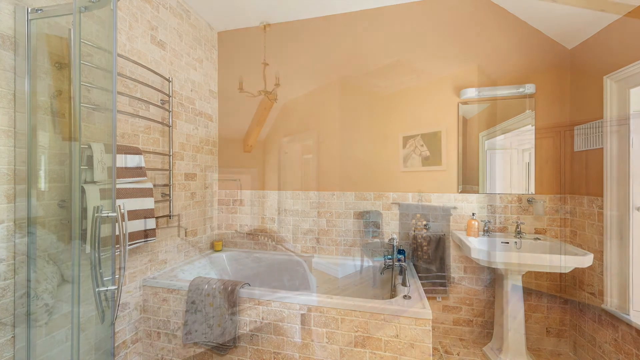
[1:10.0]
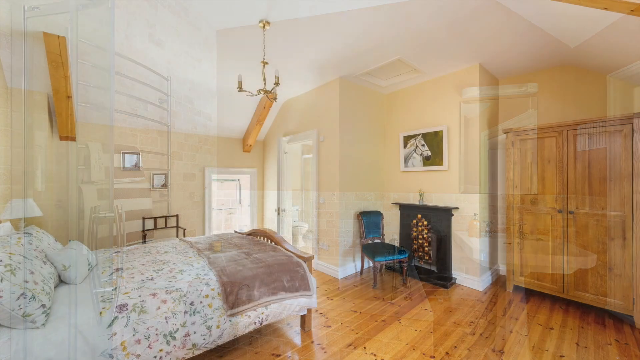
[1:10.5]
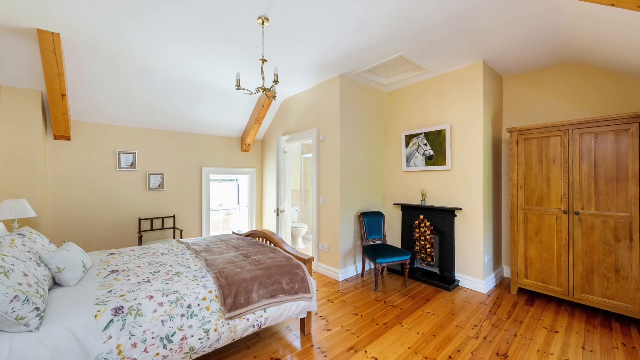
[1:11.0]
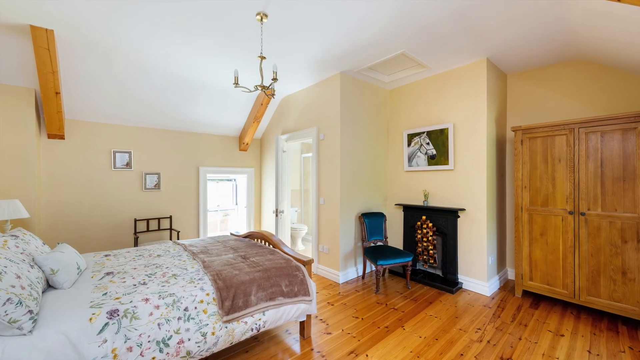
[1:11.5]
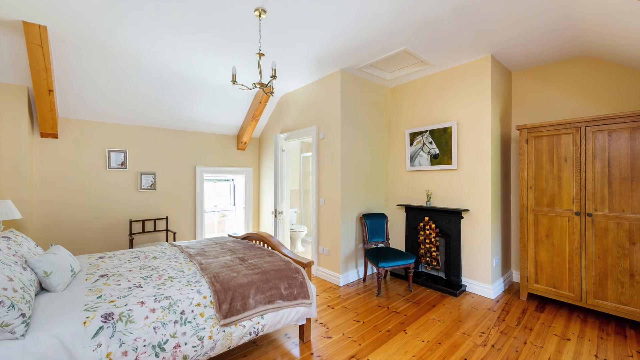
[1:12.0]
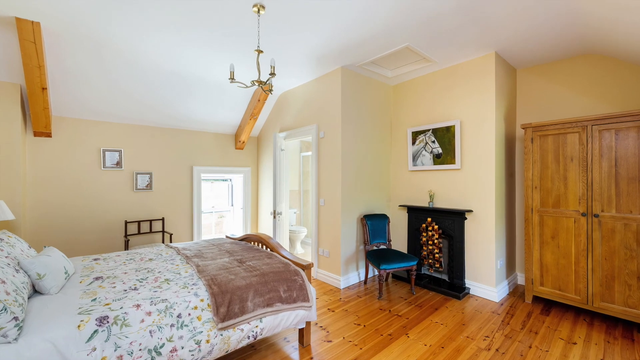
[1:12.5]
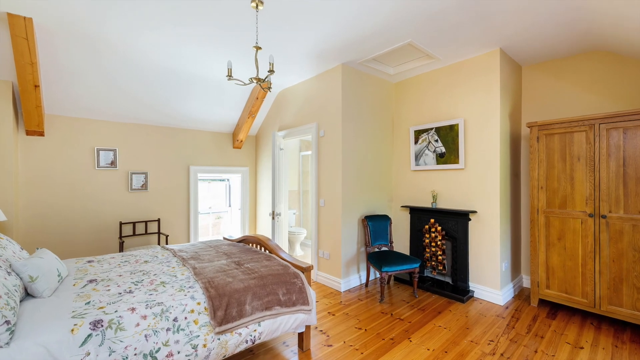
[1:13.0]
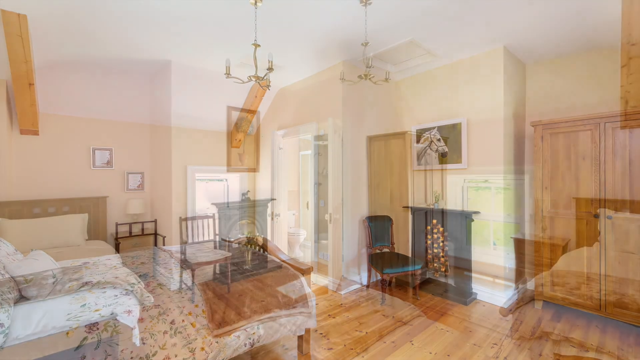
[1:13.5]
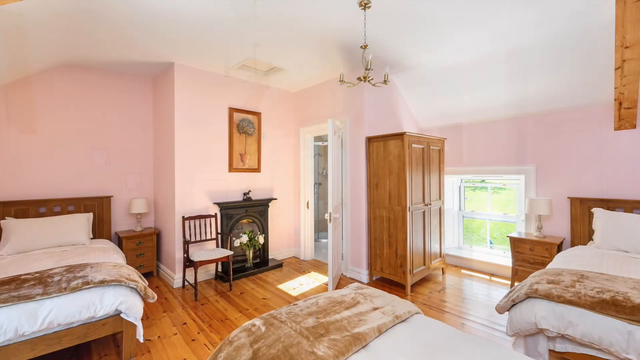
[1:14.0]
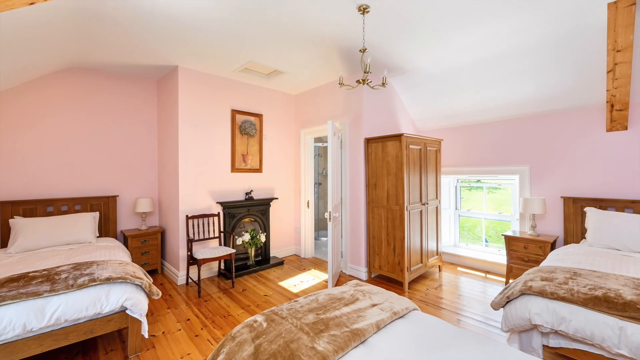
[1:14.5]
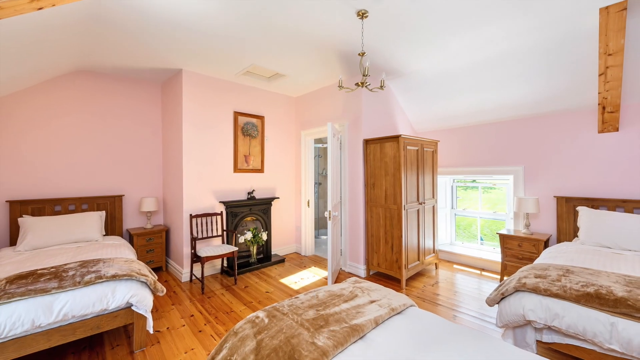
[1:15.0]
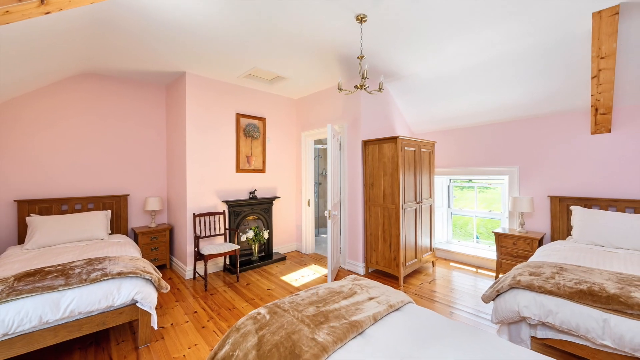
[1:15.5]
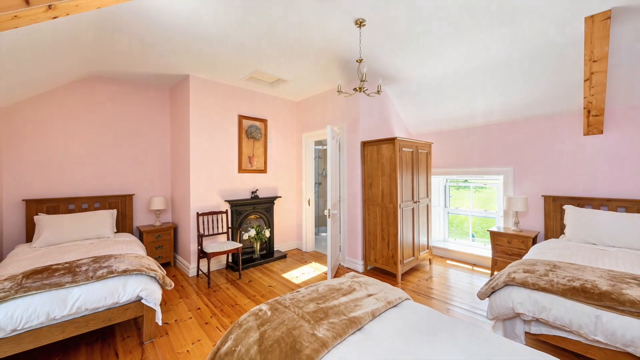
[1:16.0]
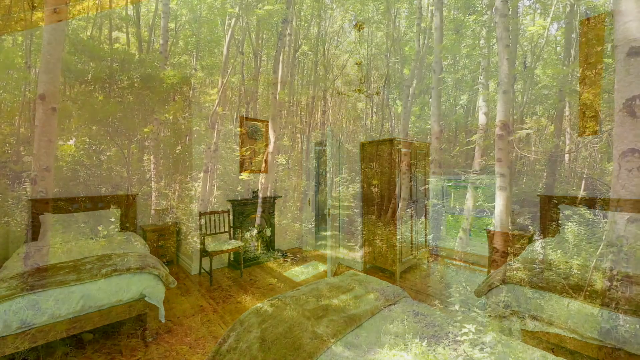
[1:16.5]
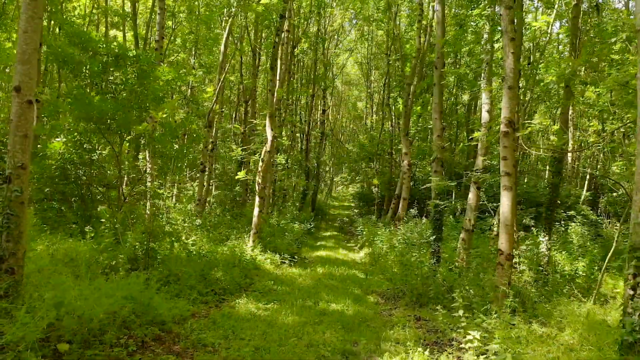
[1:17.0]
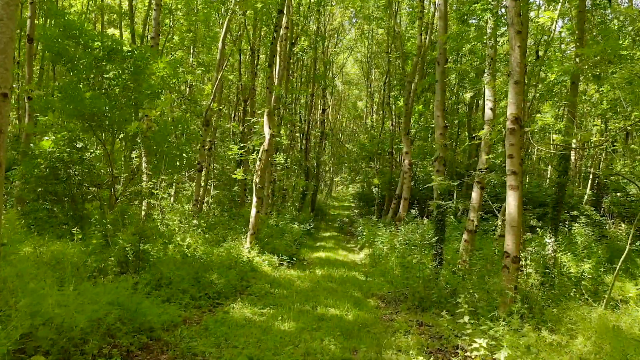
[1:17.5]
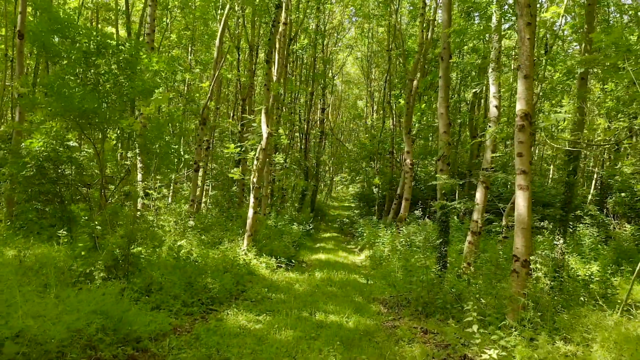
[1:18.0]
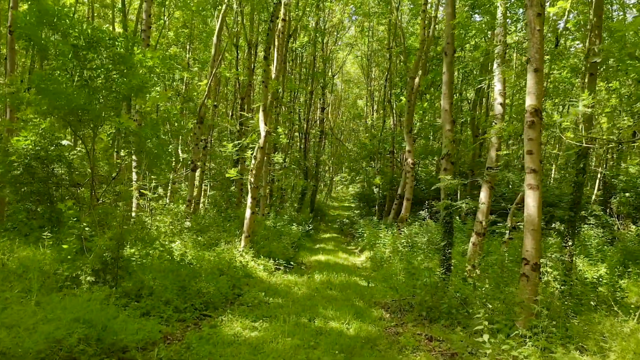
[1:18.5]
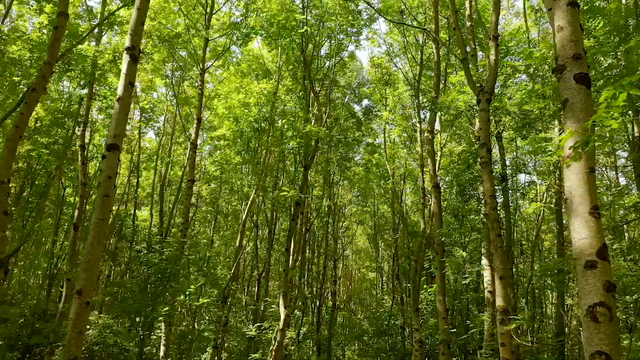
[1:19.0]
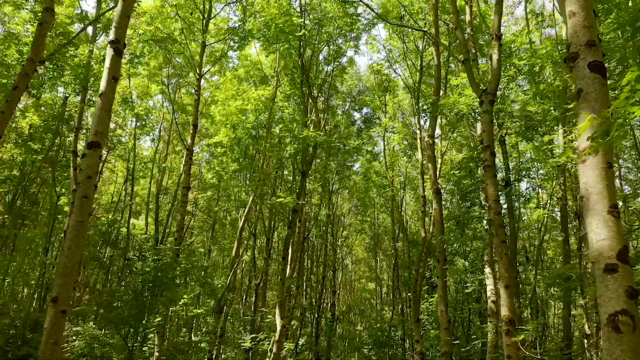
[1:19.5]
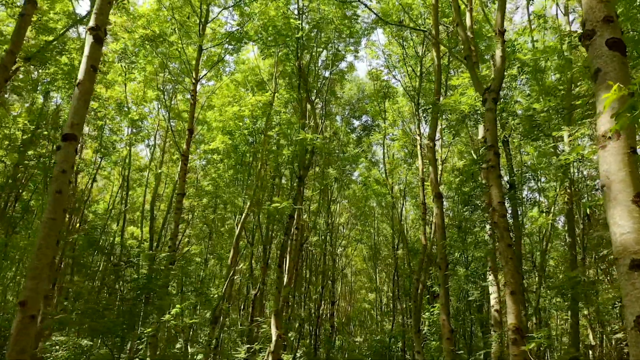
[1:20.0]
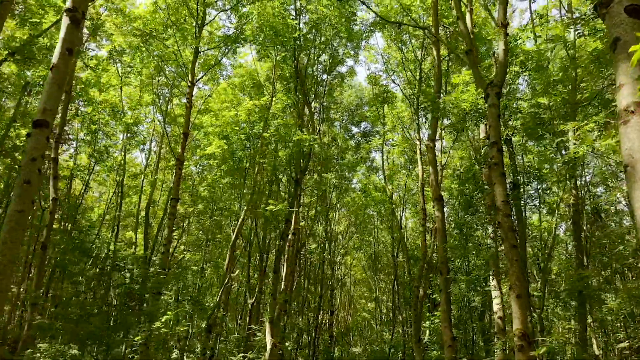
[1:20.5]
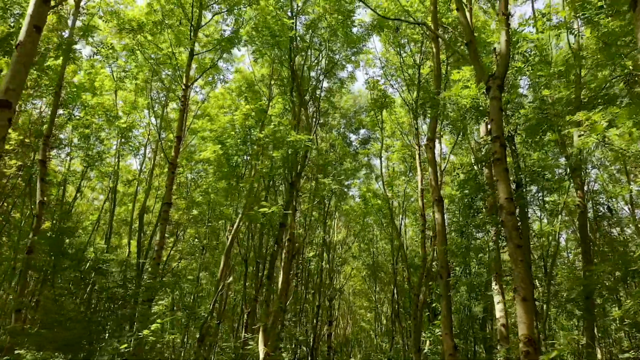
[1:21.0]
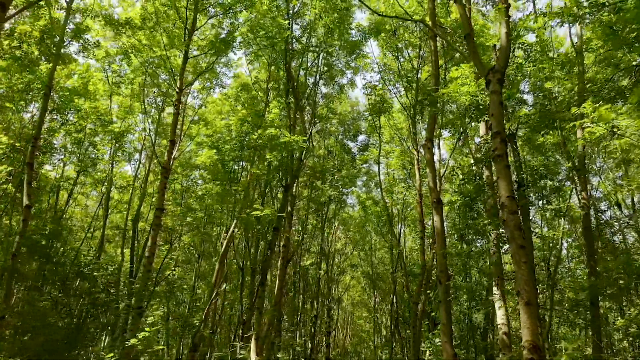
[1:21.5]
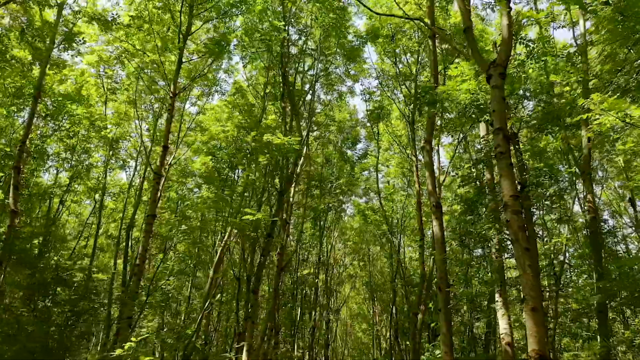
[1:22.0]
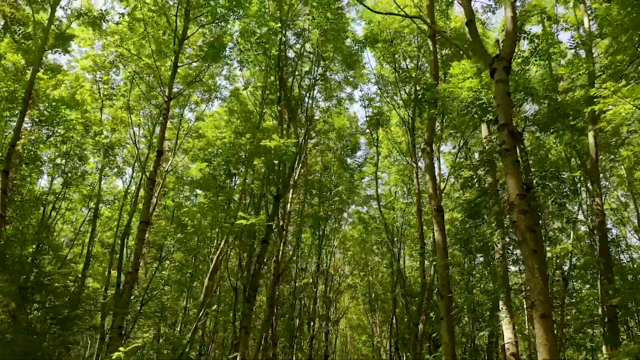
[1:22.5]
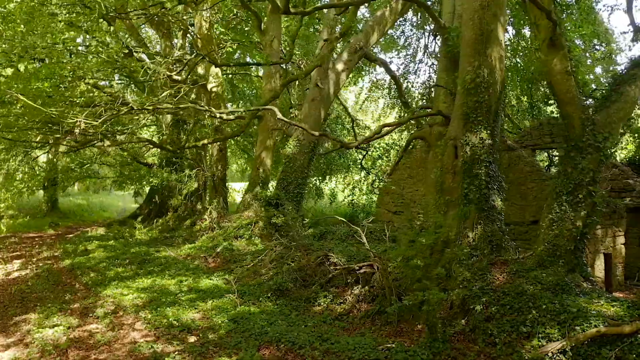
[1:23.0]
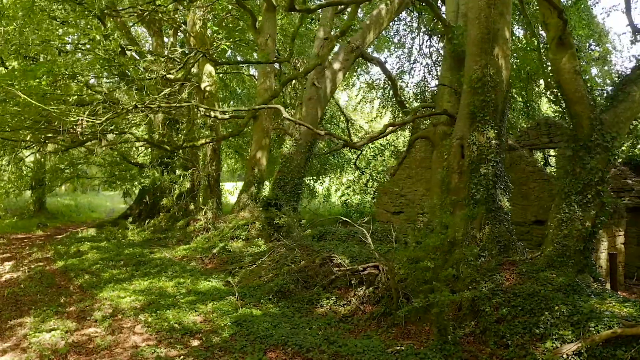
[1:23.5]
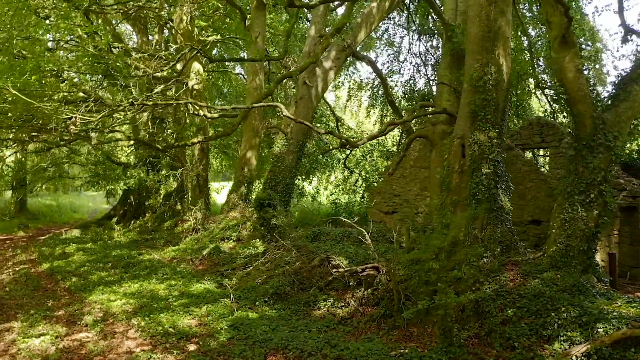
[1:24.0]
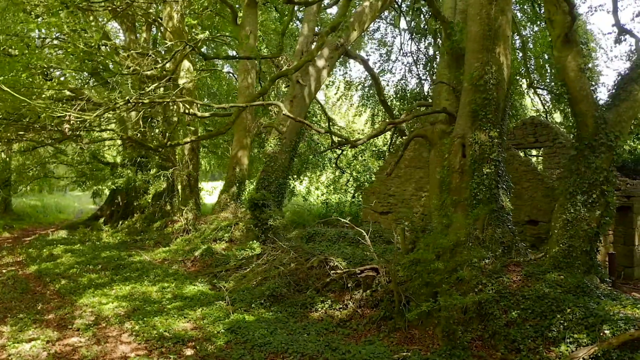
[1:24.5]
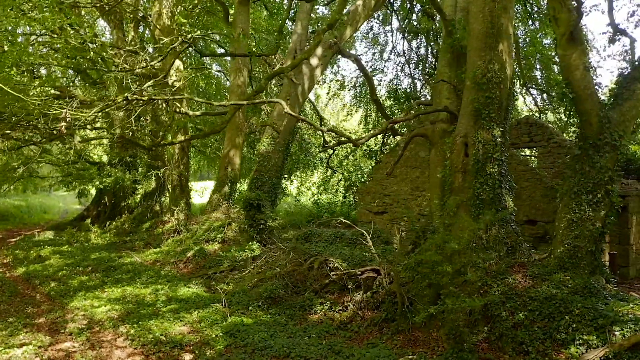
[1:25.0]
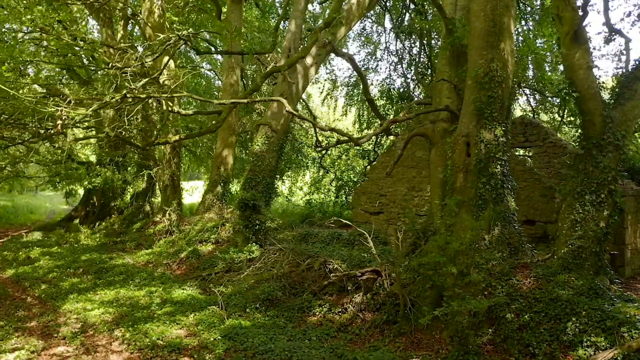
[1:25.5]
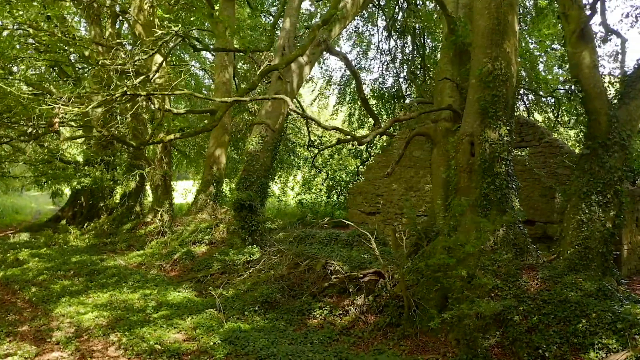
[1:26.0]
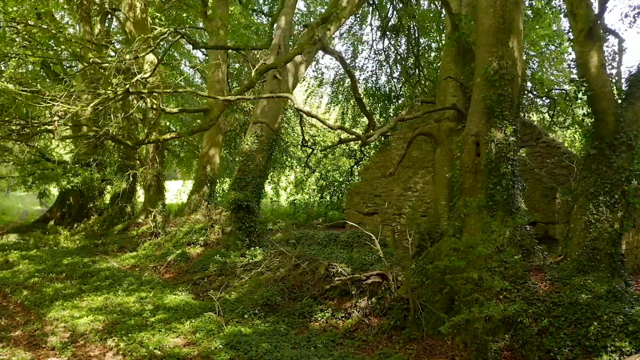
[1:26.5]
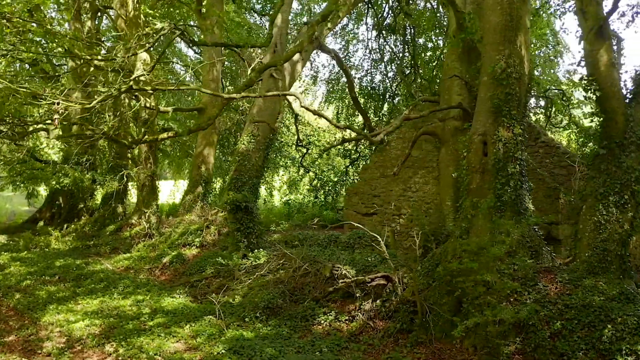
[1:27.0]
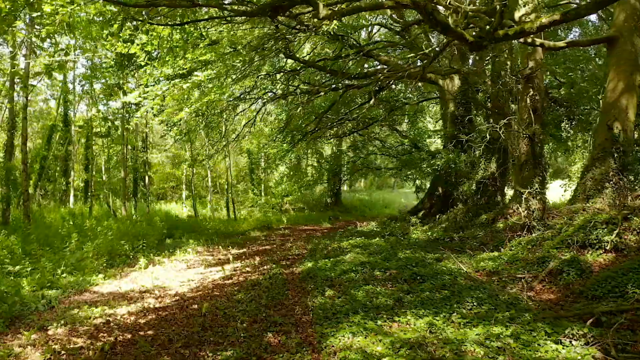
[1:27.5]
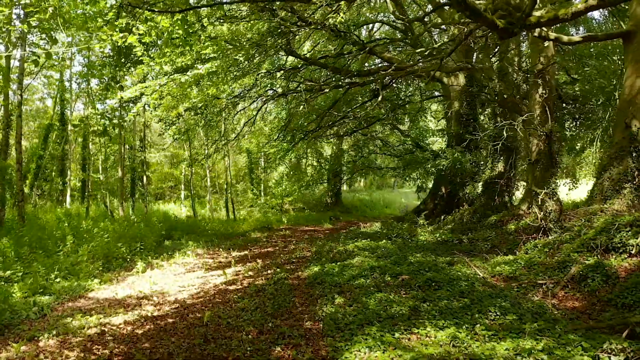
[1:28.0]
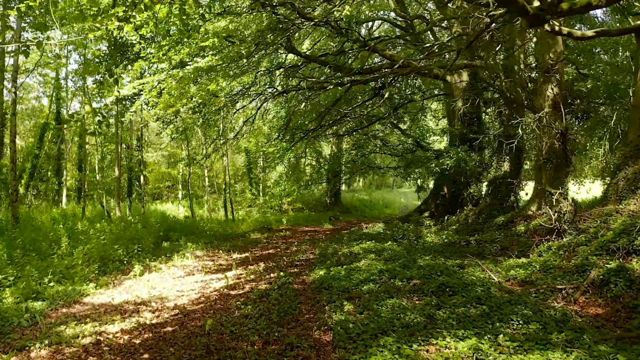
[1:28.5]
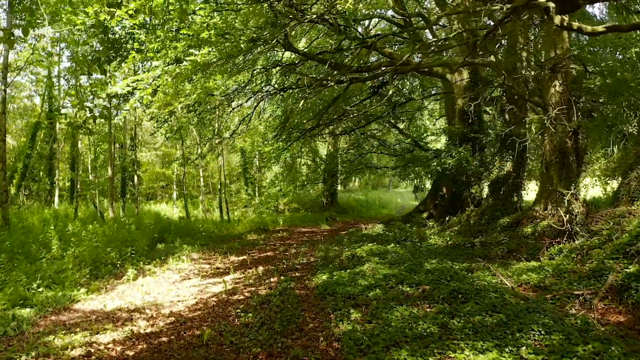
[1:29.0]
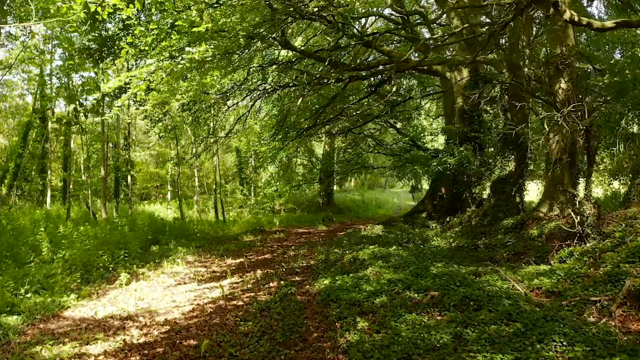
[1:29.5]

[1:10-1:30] A variety of indoor shots follows, starting in one of the bedrooms. A bed on the left has a white blanket decorated with flowers and a small brown blanket covering the bottom. There is a door leading outside and another white door leading to the bathroom, though it is hard to tell from the angle and it may be a window. A small candle chandelier or lights are above, and the room seems to be under the roof, as support beams are visible on the sides of the ceiling, so it is perhaps a second-floor bedroom. The video cuts to a different bedroom that also seems to be on the second floor, as its window is closer to the floor than to the top. This room seems to have multiple beds, perhaps a kid's room: a bed on the left, a bed on the right at roughly a perpendicular angle to it, and one more in the middle, parallel with the one on the left but closer to the camera. Then the video cuts to an outdoor scene of plants and nature paths to walk through. The trees are a mix of well-kept-looking trees and many that seem unkempt.